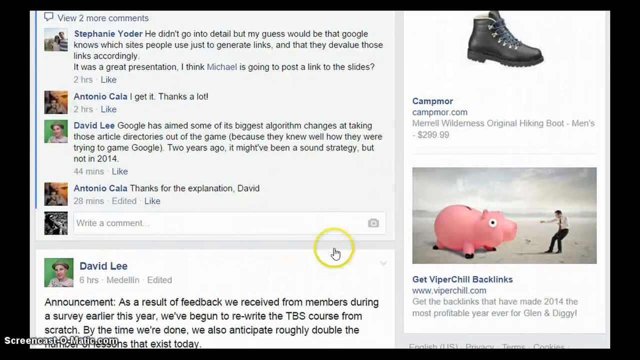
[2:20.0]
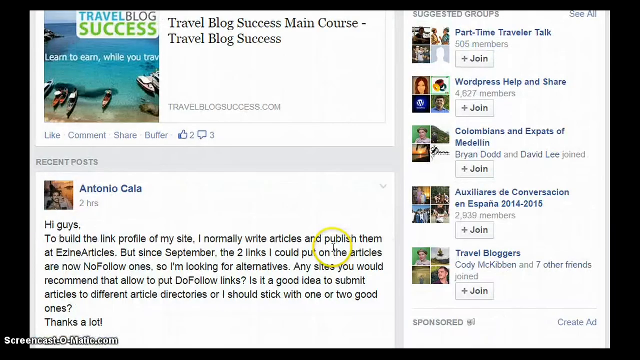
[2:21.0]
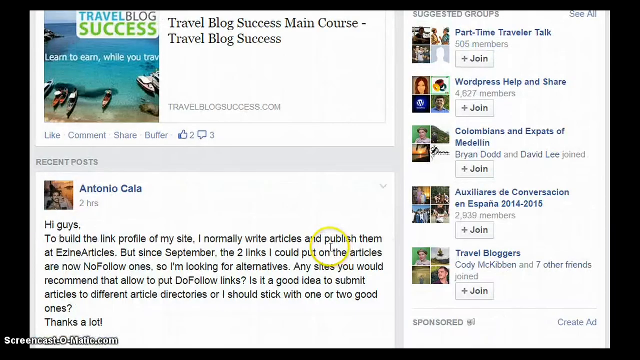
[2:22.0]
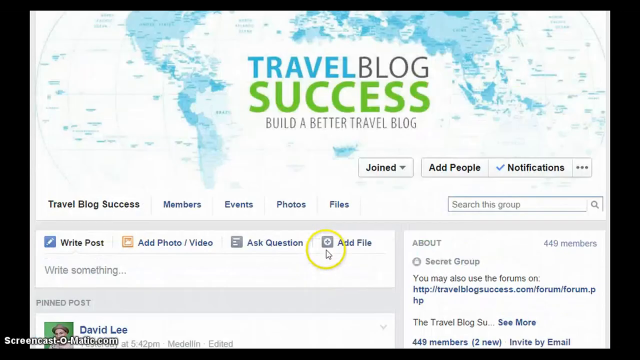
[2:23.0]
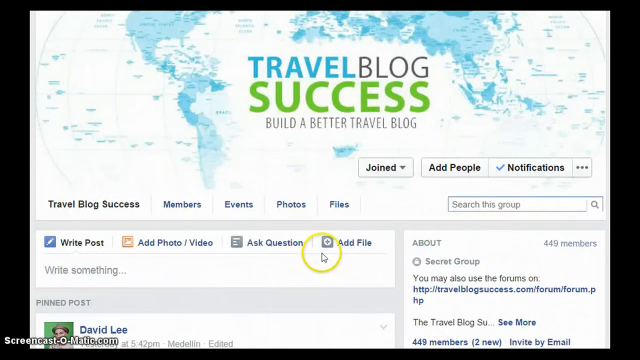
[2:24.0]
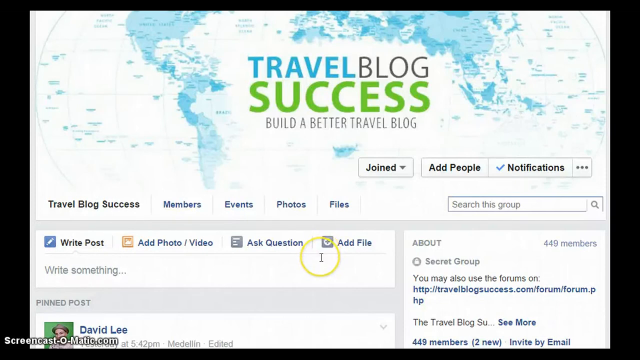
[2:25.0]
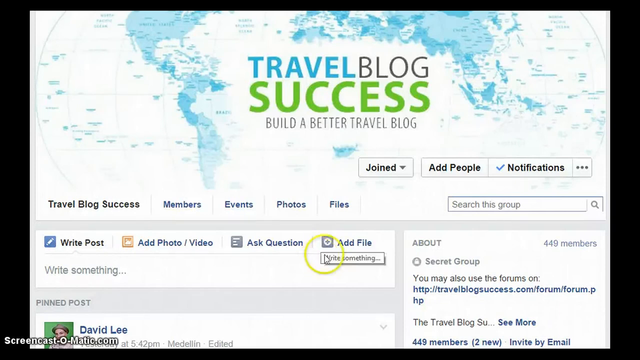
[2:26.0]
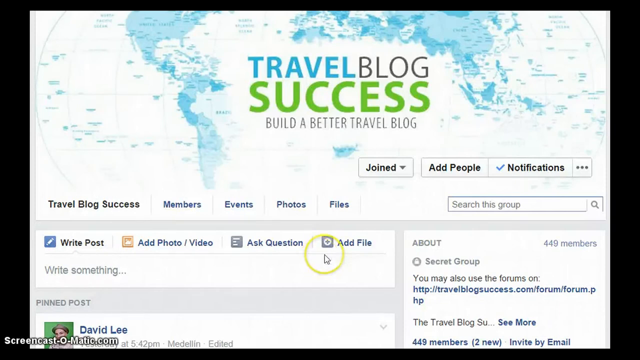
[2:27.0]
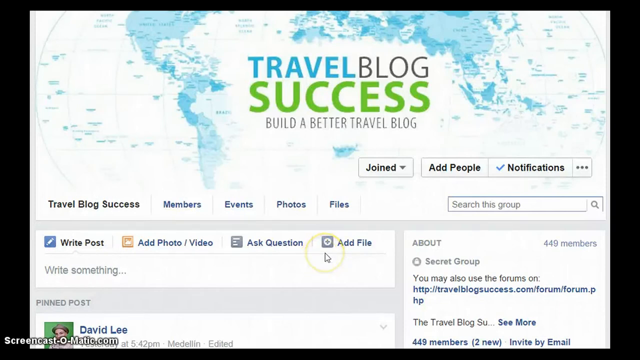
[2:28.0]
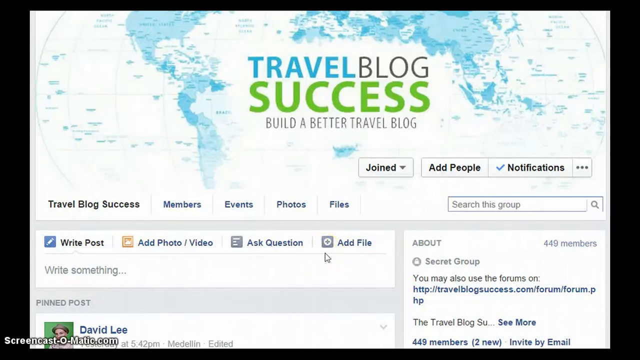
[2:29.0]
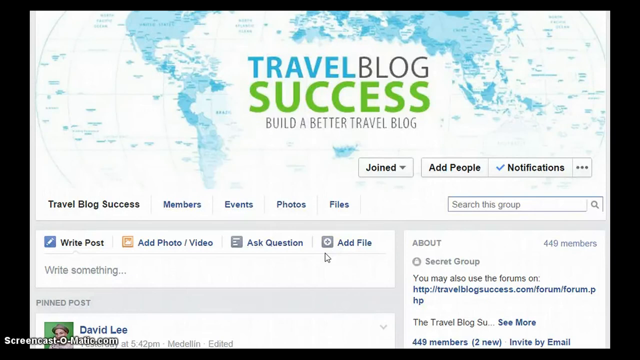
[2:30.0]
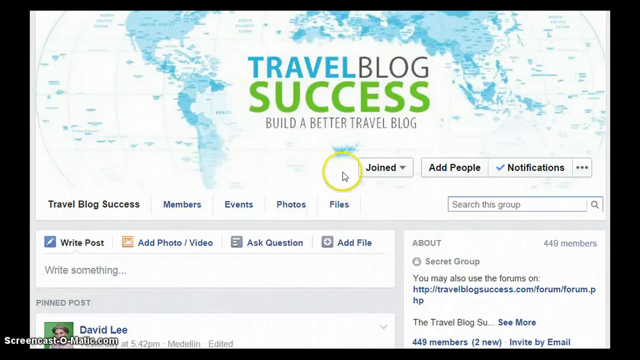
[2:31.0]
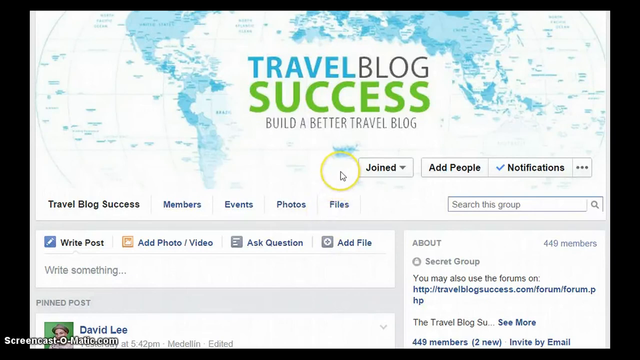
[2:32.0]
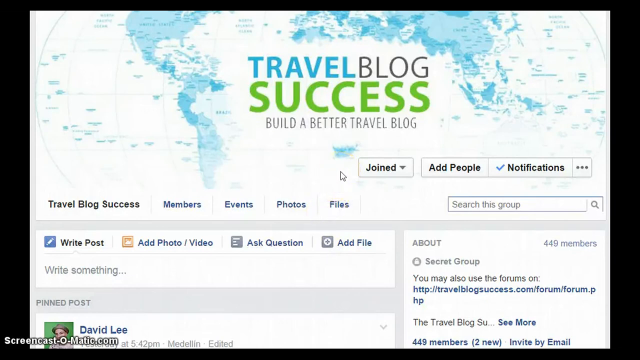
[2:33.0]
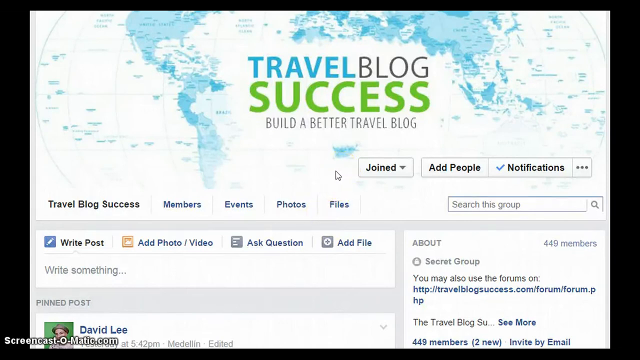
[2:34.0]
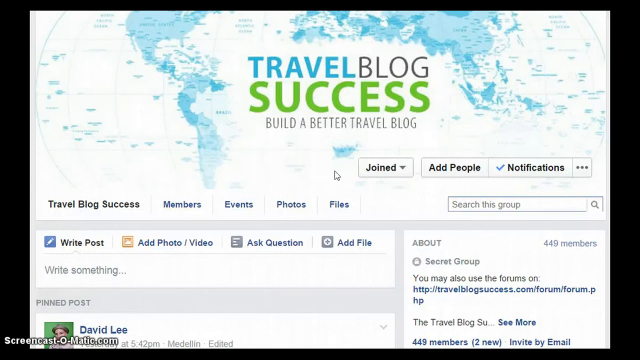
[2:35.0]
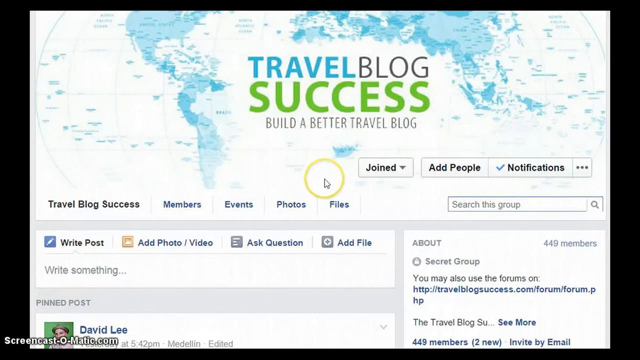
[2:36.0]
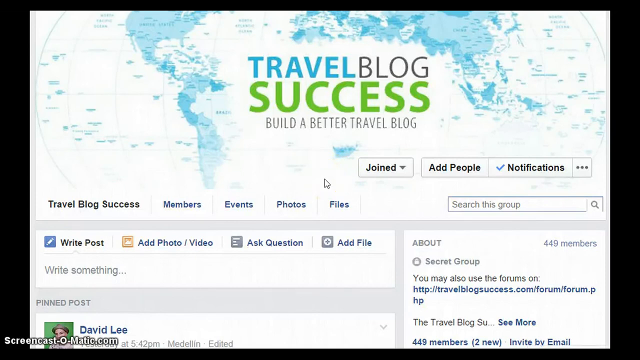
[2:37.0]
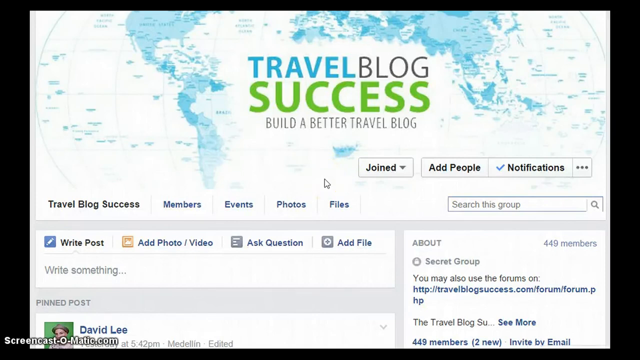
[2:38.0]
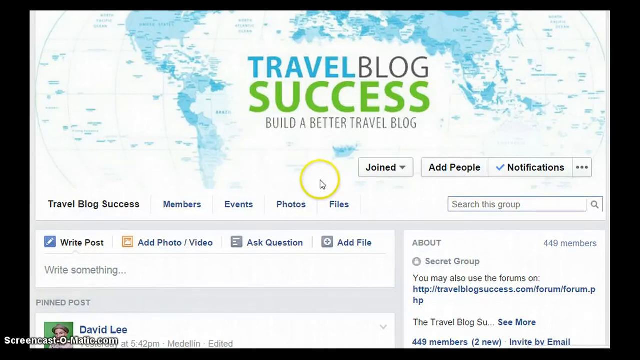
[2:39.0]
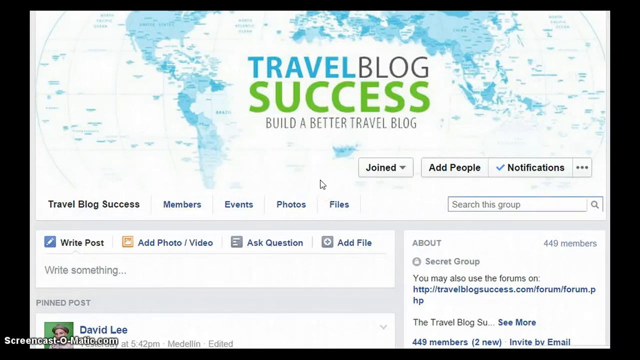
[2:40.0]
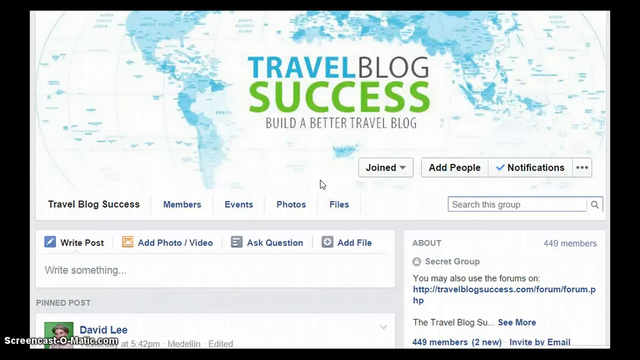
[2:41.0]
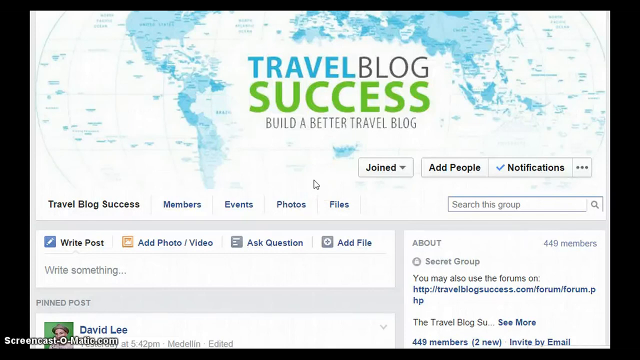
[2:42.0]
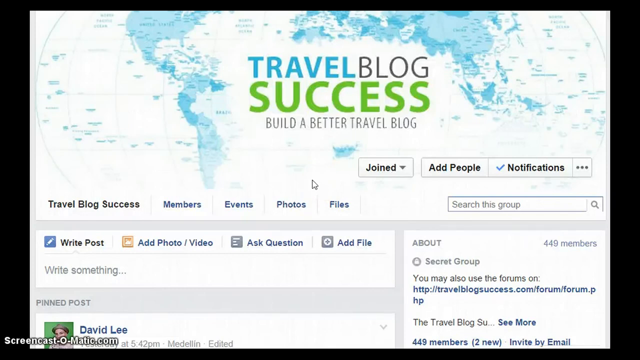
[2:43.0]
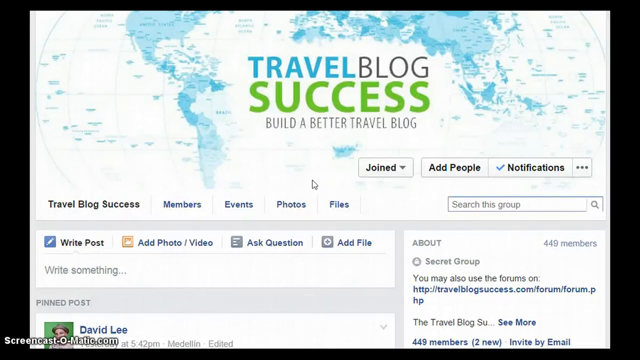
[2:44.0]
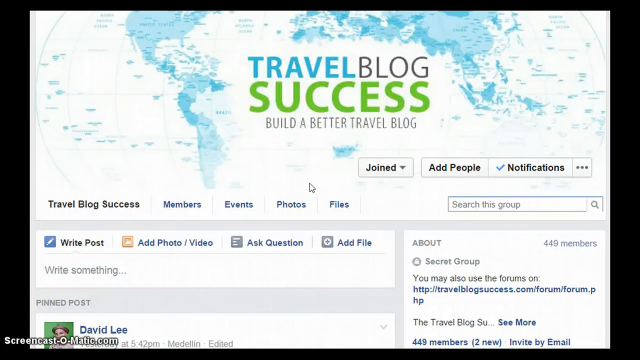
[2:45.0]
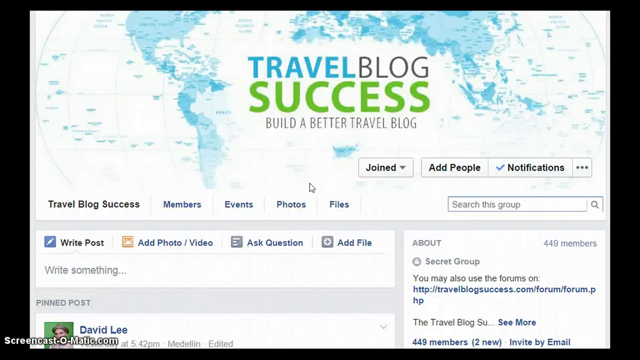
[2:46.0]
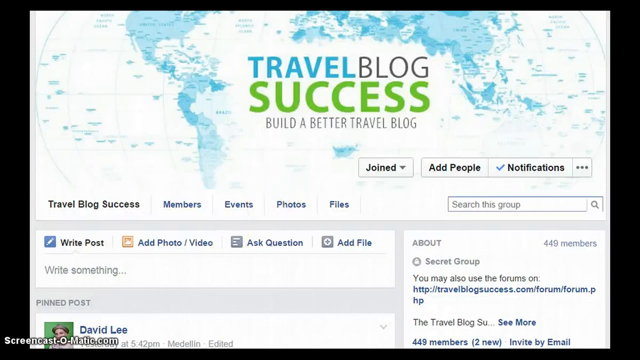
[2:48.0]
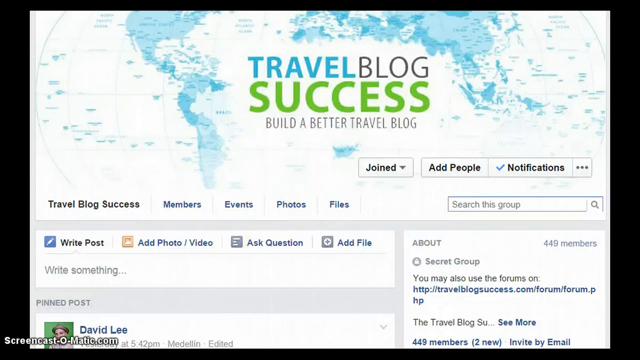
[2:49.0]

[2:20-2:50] The main page appears in blues and greens, with a globe in the background and the text "travel blog success" along with a line about a better travel blog. The video then moves to posts from people, such as one beginning "hi guys to build a link profile on my site I normally write articles and publish them", continuing that since September the two links allowed in those articles are now no follow ones, and asking people from the group for help with alternatives. In between, a page shows "travel blog success build a better travel blog" with clickable areas for members, events, photos and files, and options to add people, apparently as friends, write a post, add a photo or video, ask a question, and add a file. It looks like this is all put out by a particular person, David Lee. Another post reads: "Everyone who leaves a review between now and 11 p.m. Sunday, September 28 2014 would be entered to win either a $50 Amazon gift card or $50 USD in cold hard cash via PayPal." There is a weekend giveaway, and text reading "TBS members now have the ability to leave a quick review of their experience with the course and community directly on our sales page".